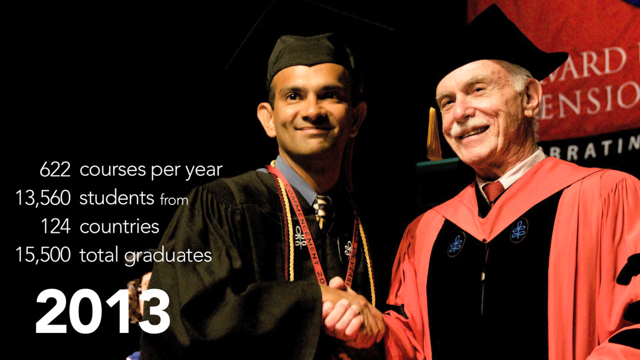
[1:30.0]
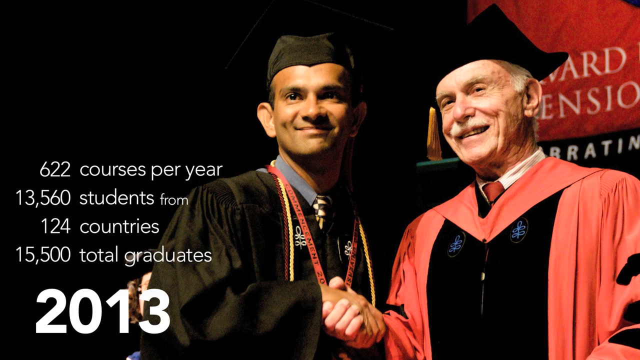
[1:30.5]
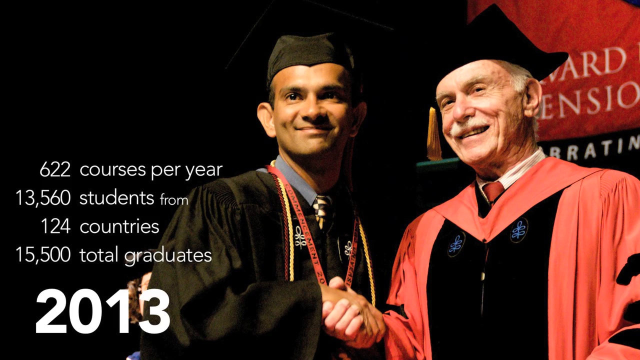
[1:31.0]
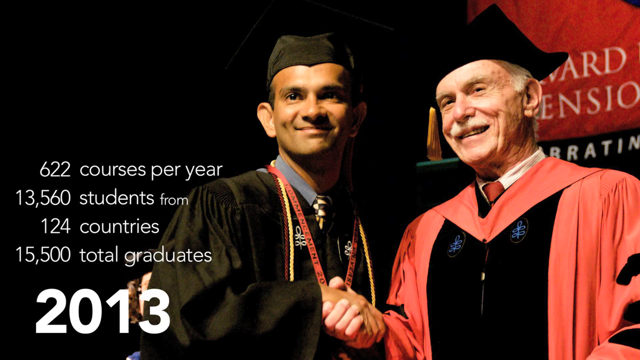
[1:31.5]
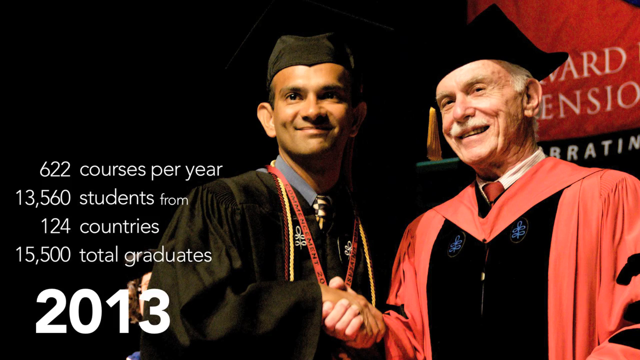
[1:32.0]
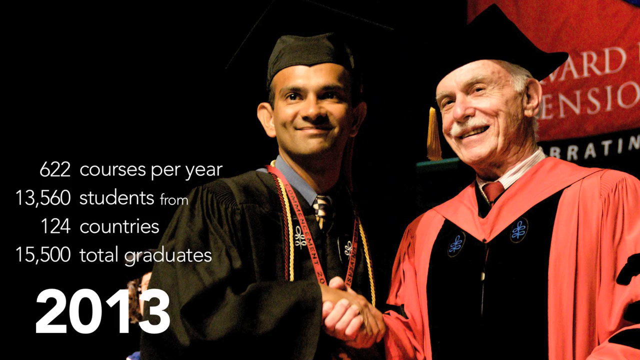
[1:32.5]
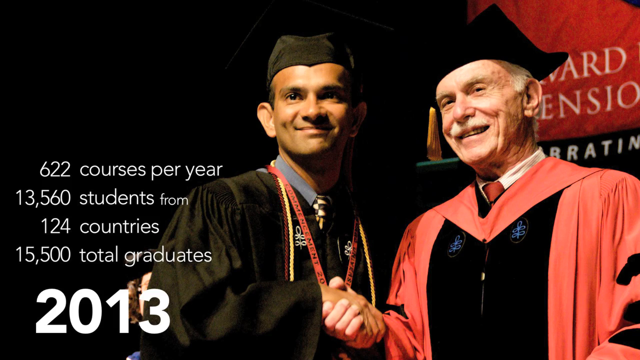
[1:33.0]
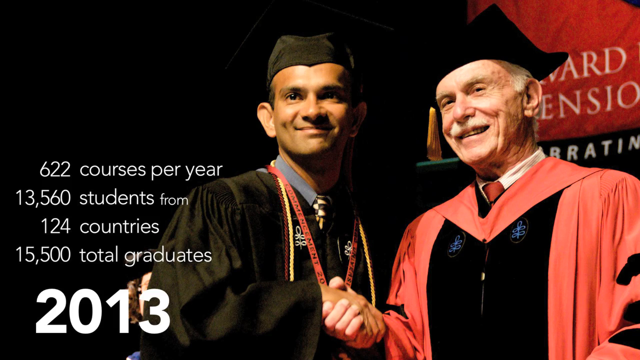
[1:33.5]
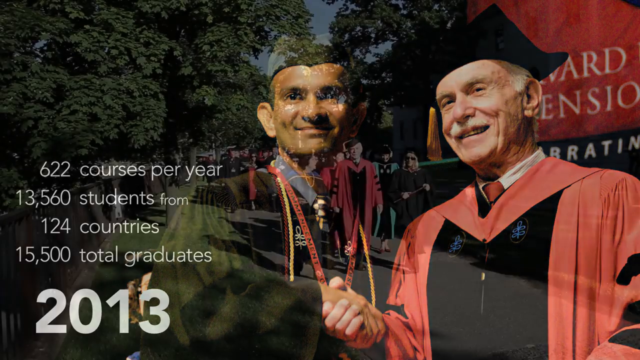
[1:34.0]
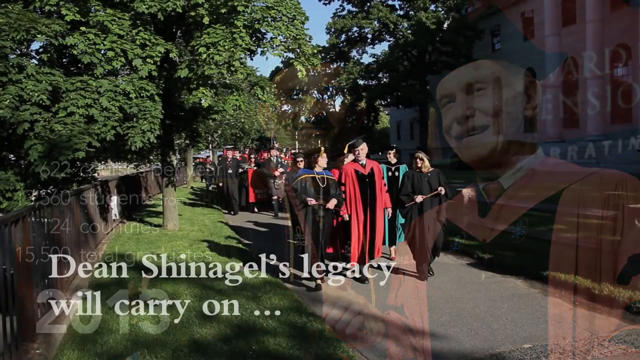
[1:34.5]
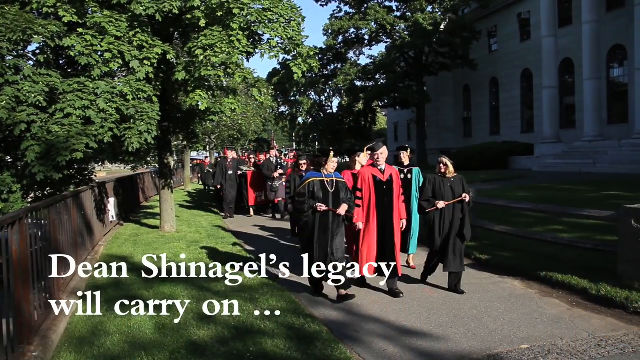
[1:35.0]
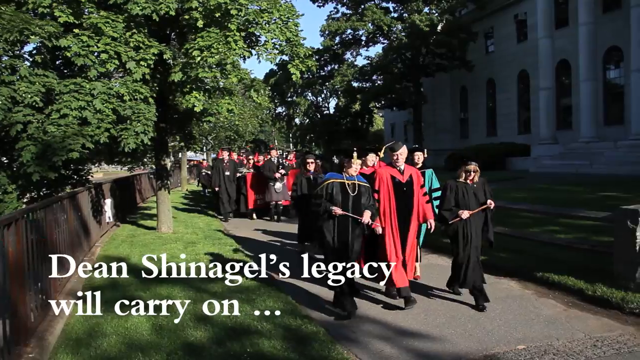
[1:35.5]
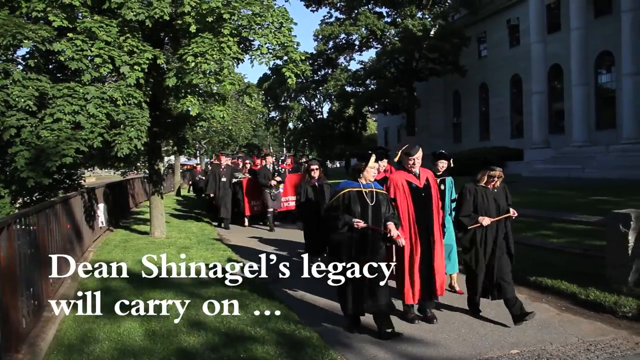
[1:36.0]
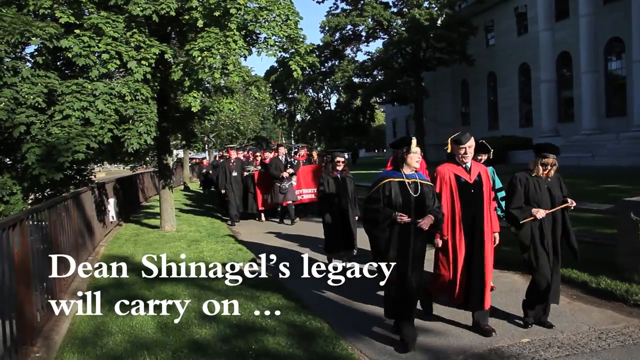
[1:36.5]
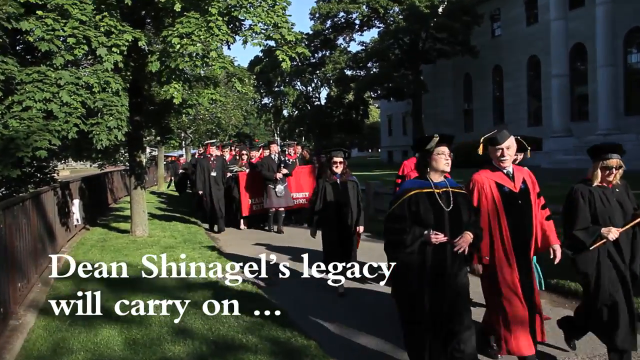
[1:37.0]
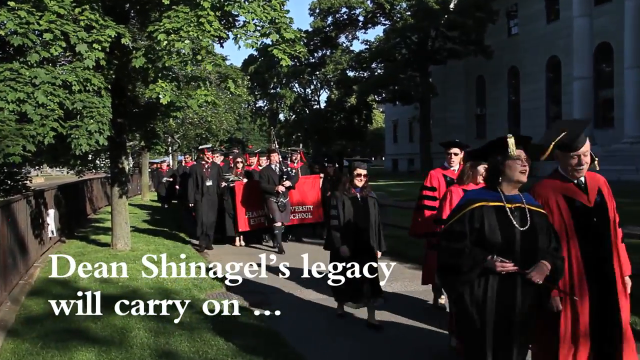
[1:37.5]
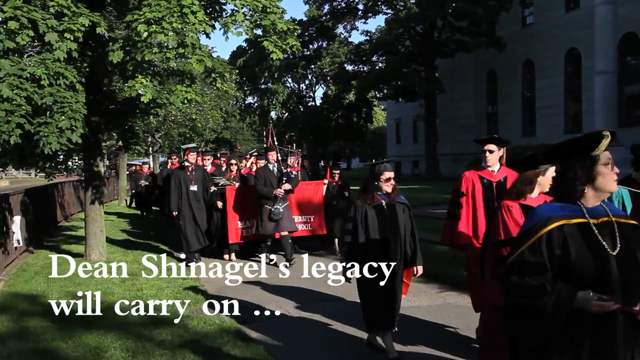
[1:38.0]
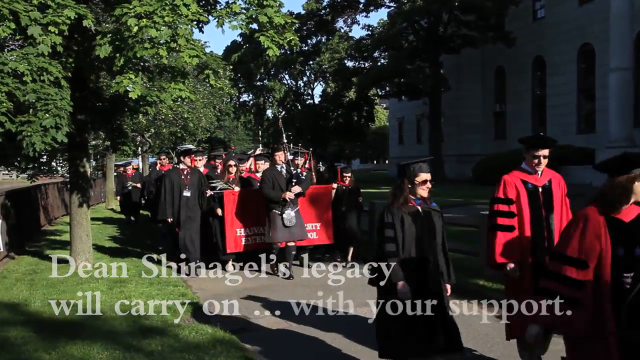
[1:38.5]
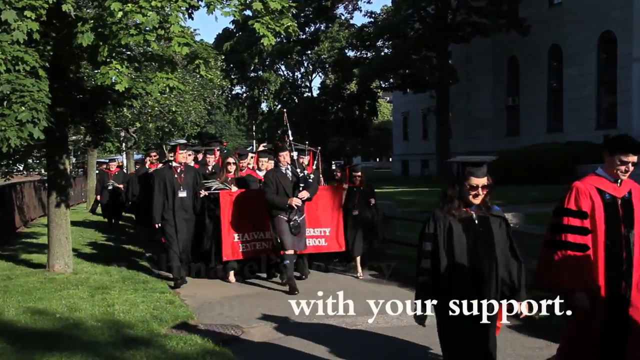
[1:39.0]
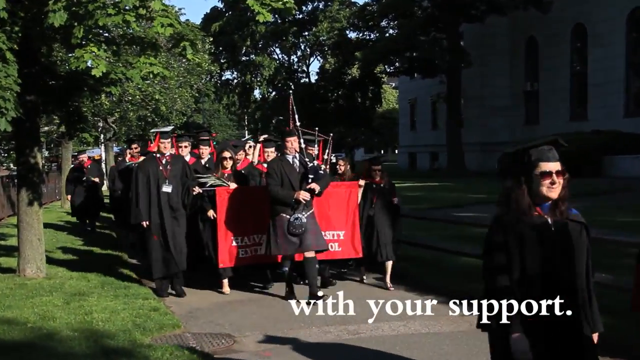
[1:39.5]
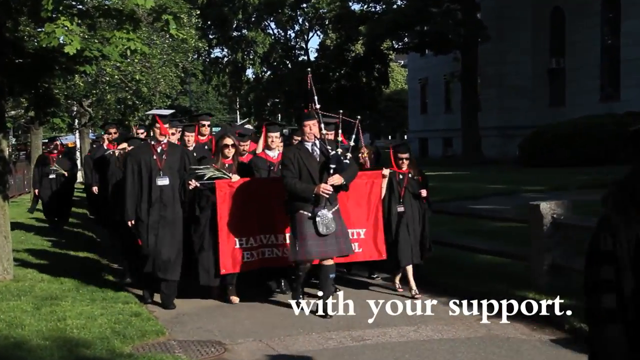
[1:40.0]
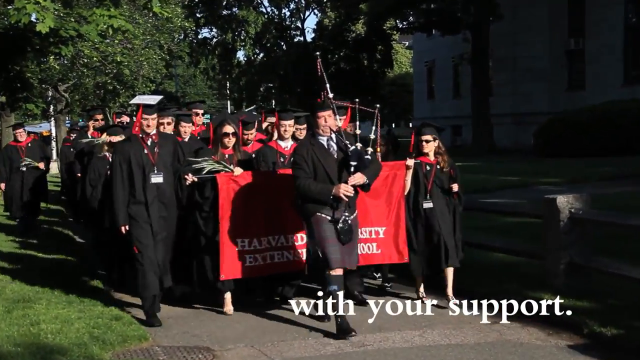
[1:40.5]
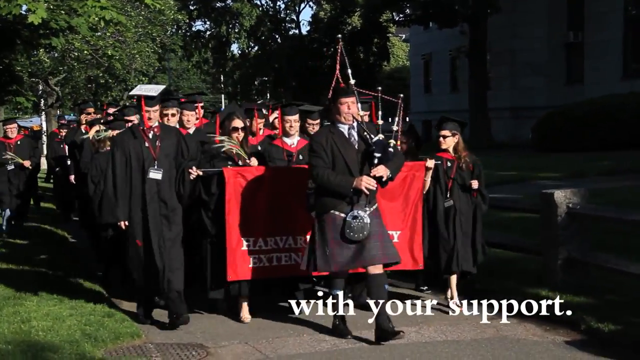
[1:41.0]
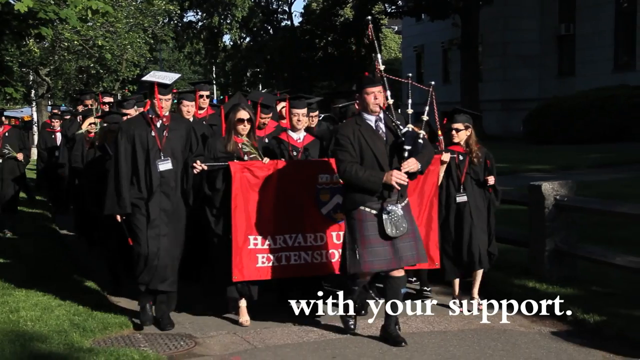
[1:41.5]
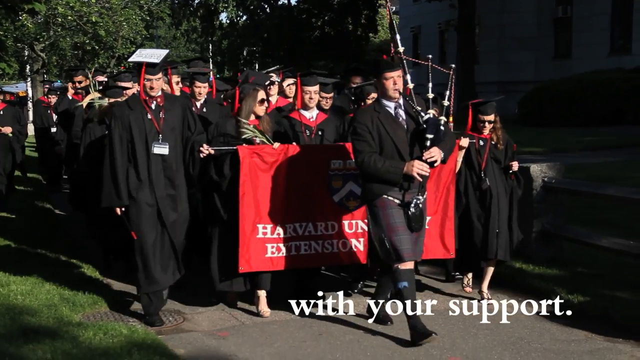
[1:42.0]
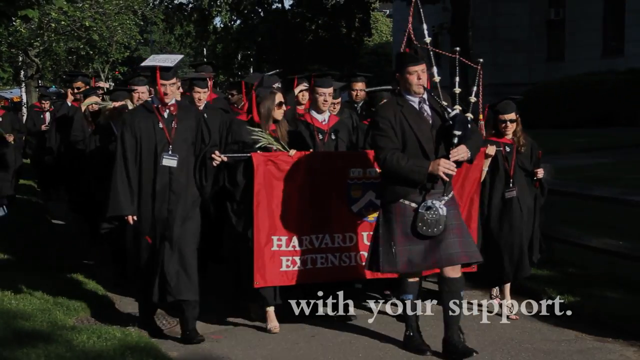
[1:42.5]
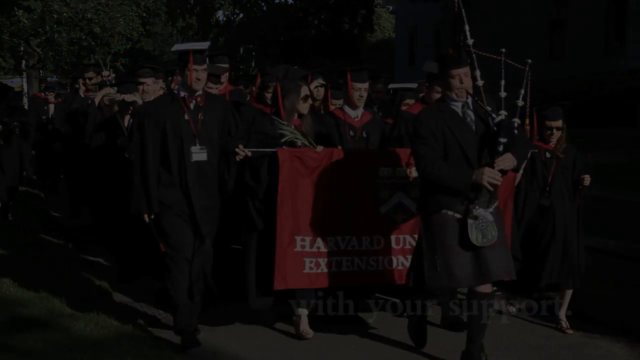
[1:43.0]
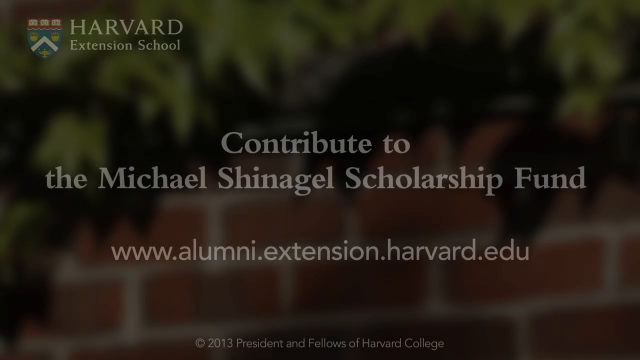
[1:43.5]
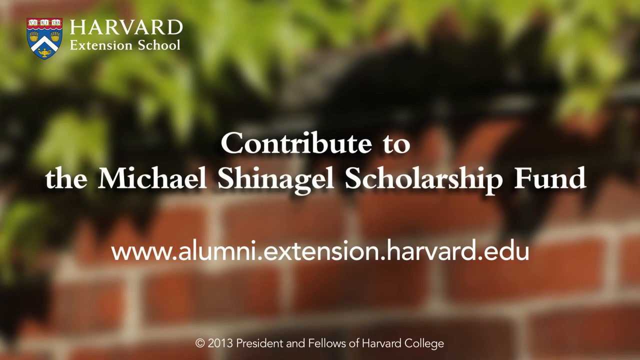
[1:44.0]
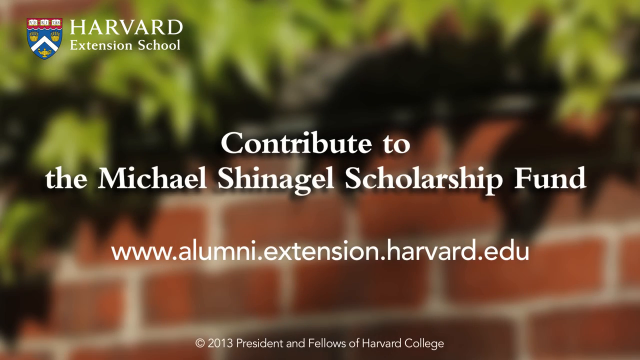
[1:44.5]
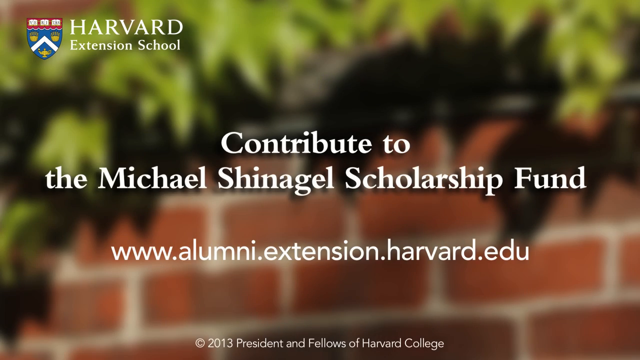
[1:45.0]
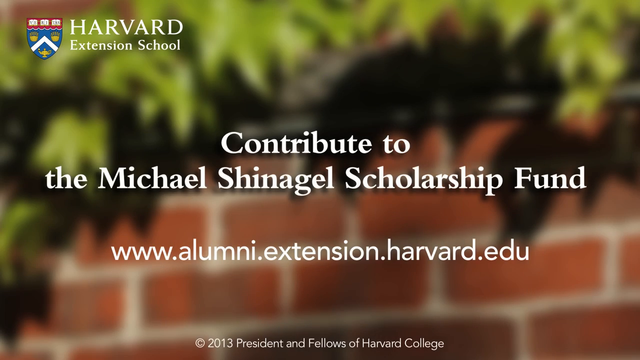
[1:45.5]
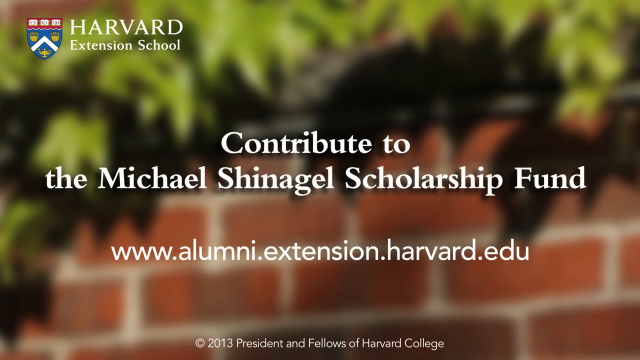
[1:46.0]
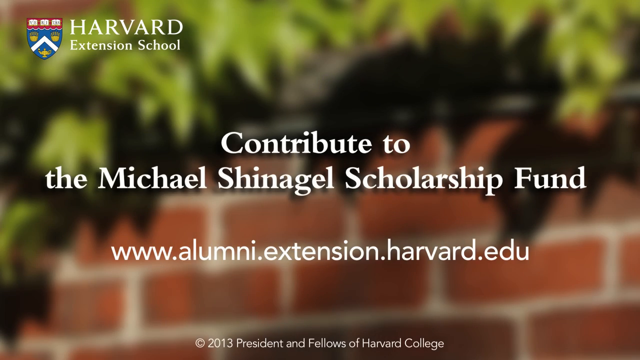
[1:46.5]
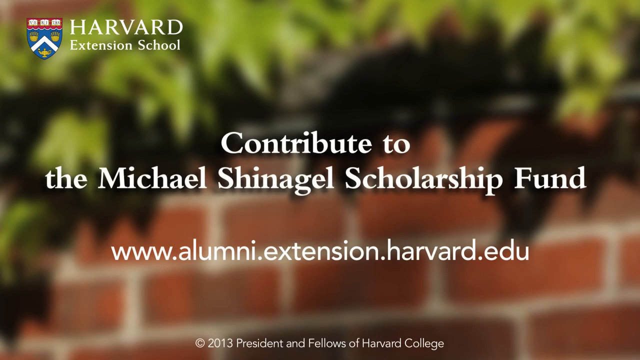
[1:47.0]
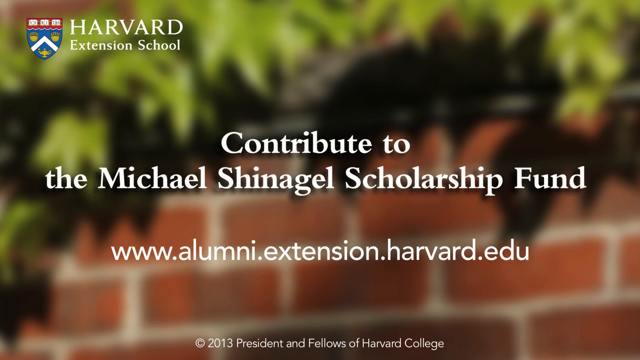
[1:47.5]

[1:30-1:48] Statistics read "622 courses per year, 15,560 students from 124 countries, 15,500 total graduates" for 2015, alongside a dean and a professor shaking hands with what looks like a graduate. Text then refers to "Dean Schillinger's legacy." A huge crowd of people dressed for graduation in green and black, with red, is shown. Text mentions the "Michael Schillinger Scholarship" and "with your support," and the video ends by showing a website for contributing to the scholarship fund and supporting Harvard University Extension.